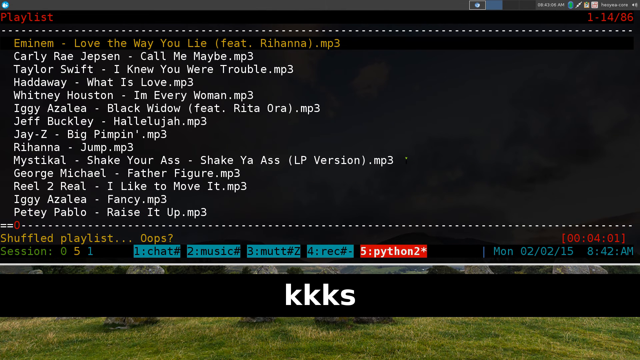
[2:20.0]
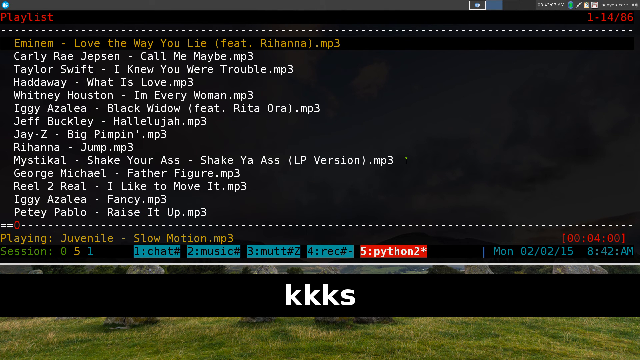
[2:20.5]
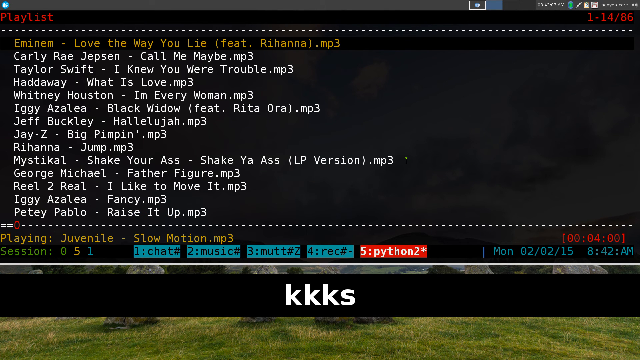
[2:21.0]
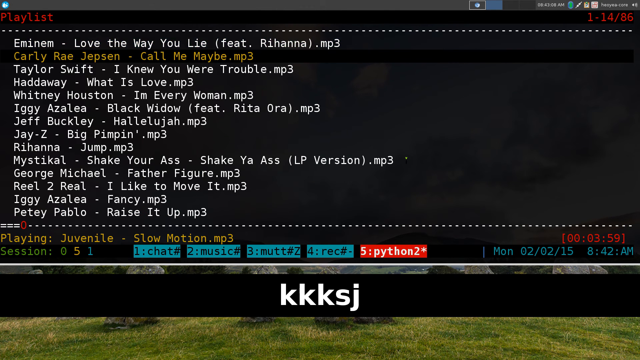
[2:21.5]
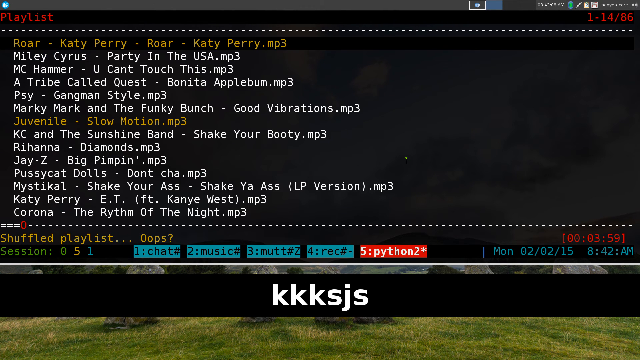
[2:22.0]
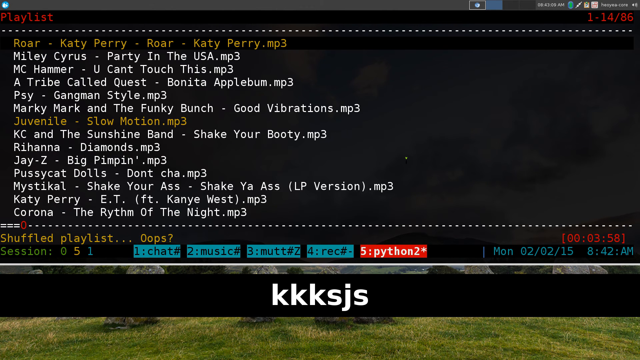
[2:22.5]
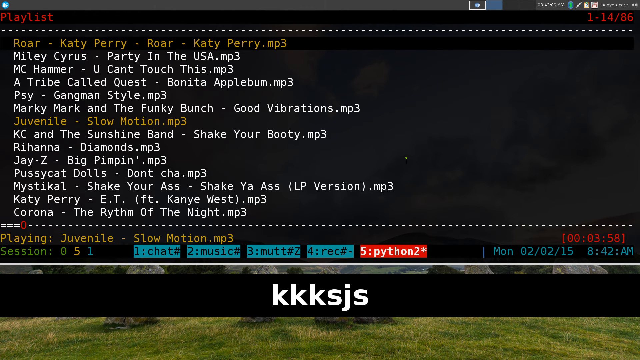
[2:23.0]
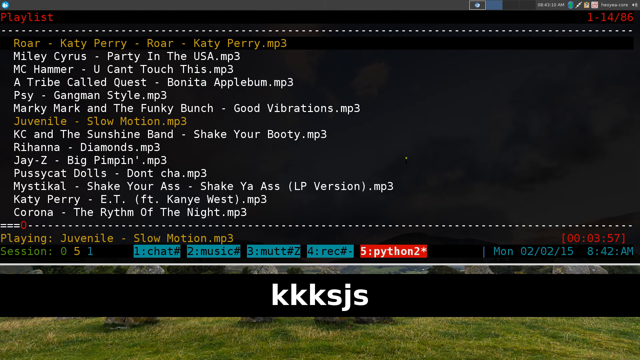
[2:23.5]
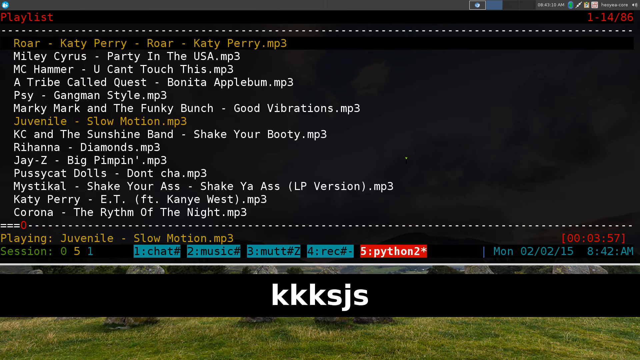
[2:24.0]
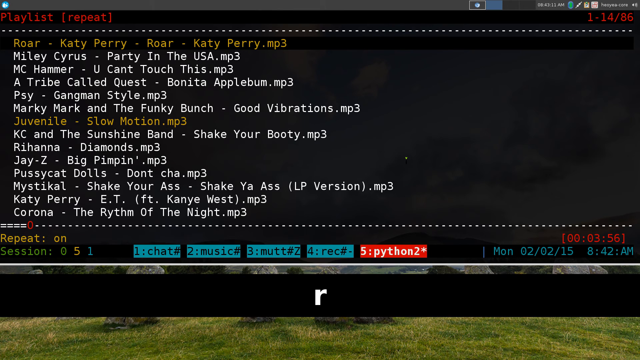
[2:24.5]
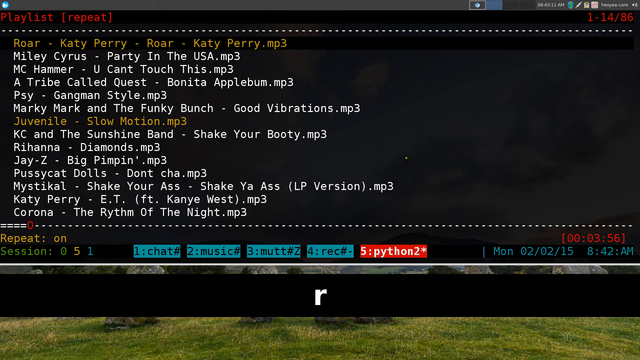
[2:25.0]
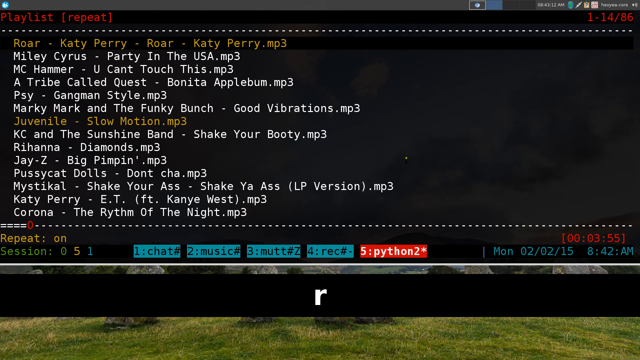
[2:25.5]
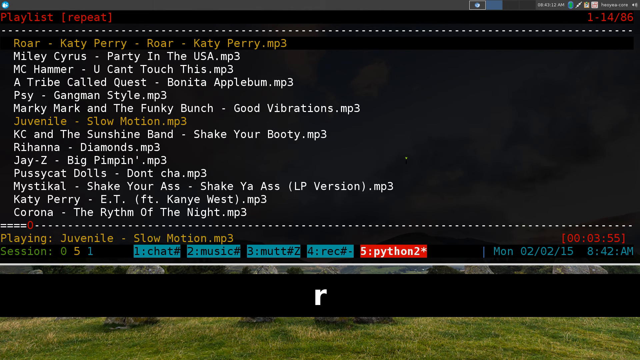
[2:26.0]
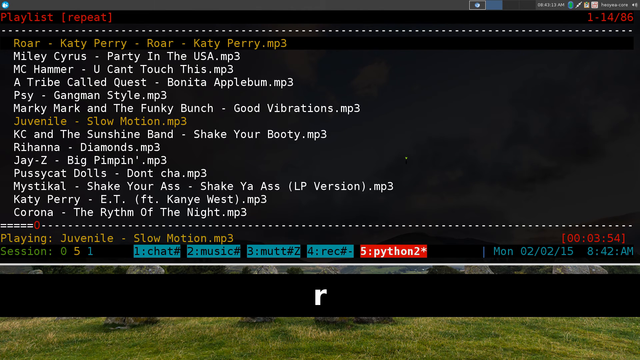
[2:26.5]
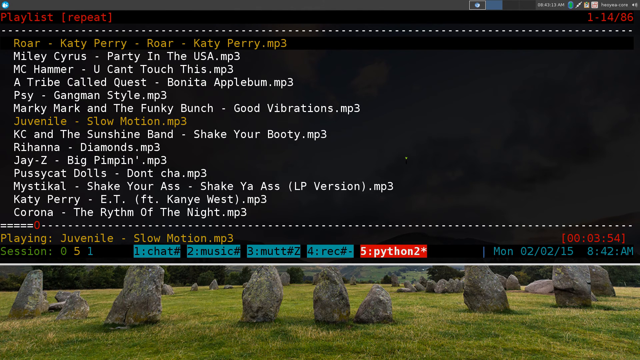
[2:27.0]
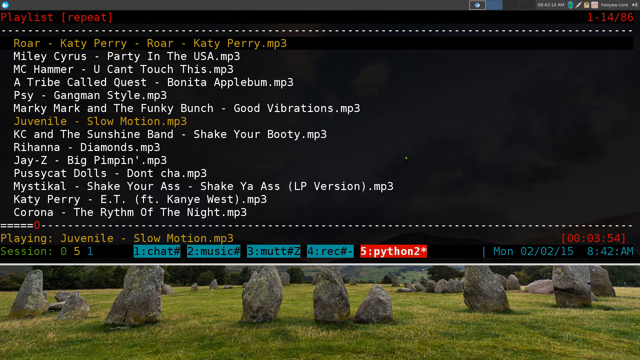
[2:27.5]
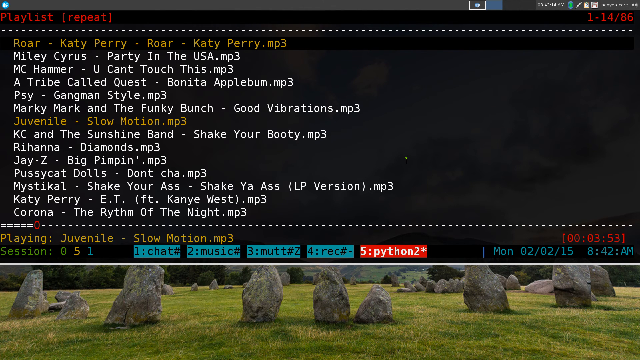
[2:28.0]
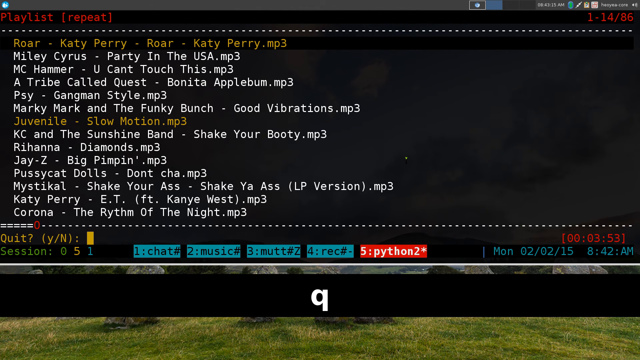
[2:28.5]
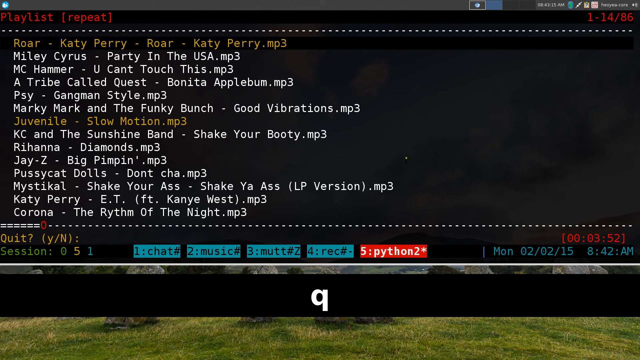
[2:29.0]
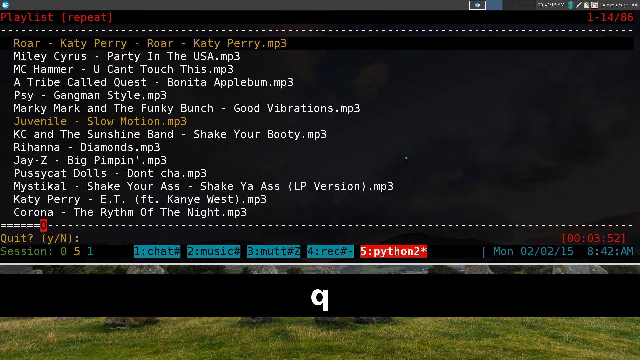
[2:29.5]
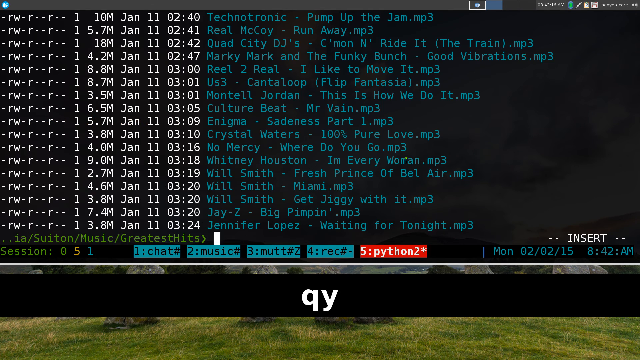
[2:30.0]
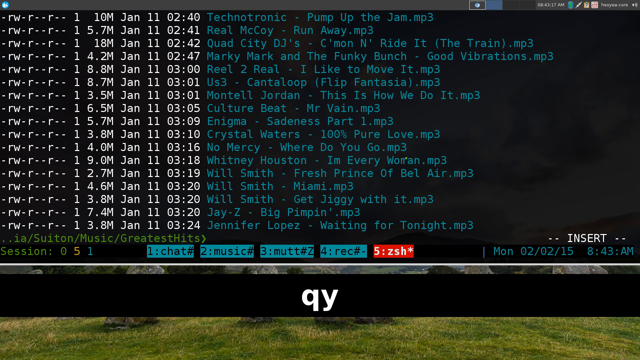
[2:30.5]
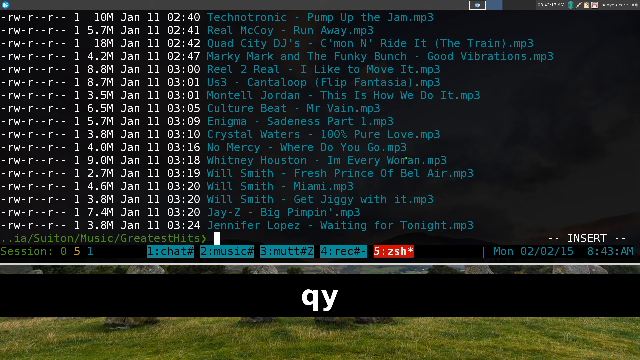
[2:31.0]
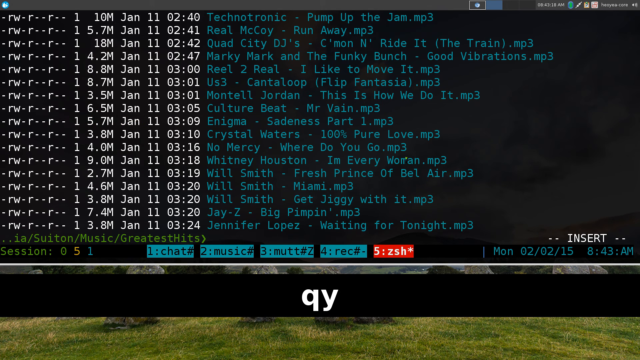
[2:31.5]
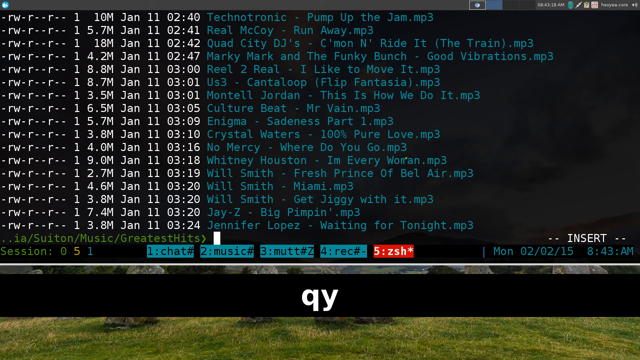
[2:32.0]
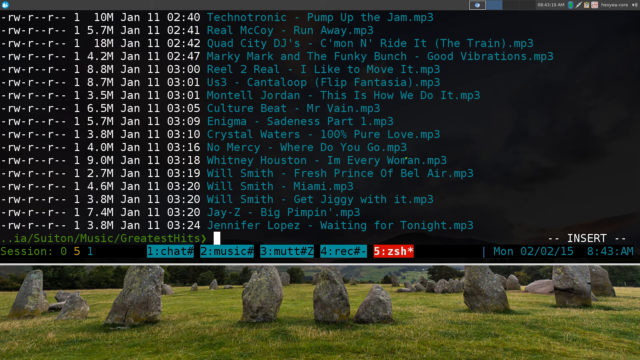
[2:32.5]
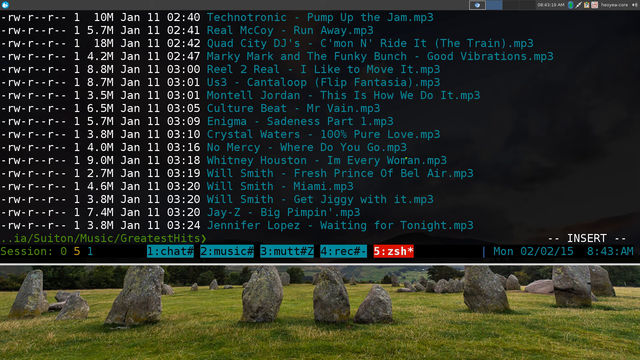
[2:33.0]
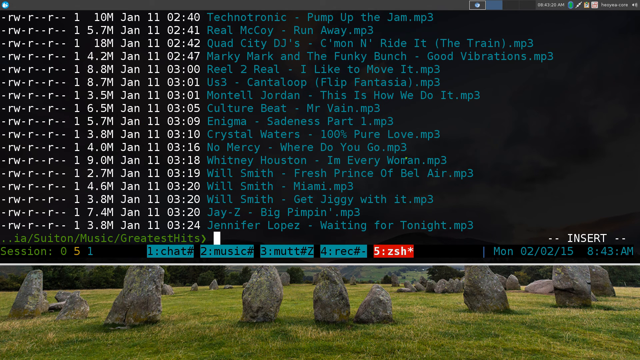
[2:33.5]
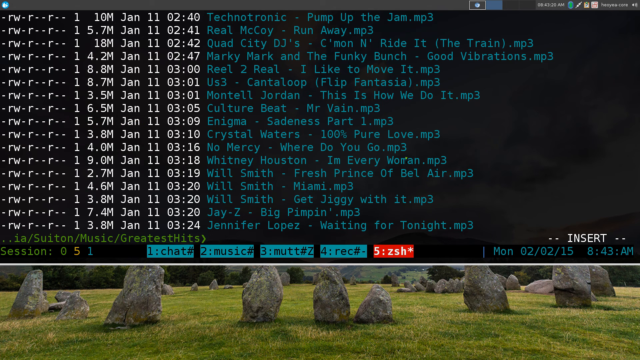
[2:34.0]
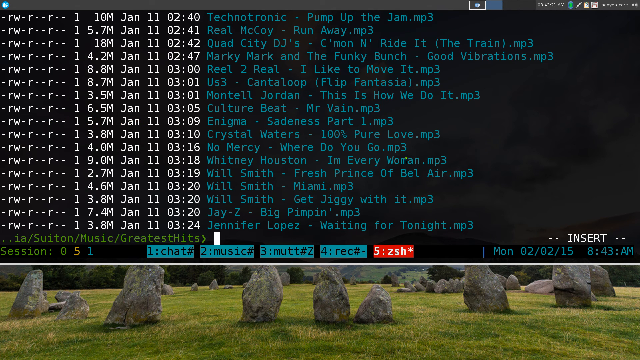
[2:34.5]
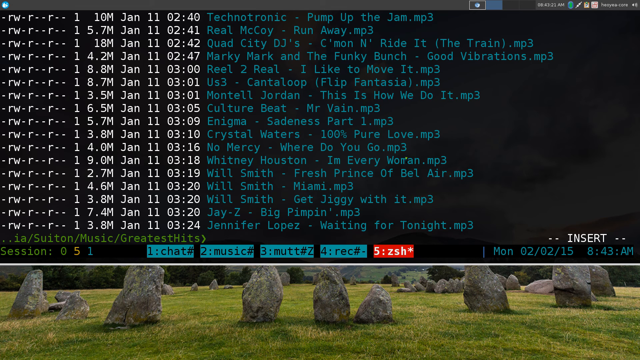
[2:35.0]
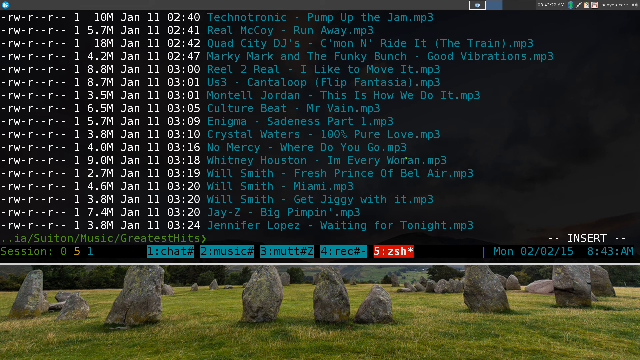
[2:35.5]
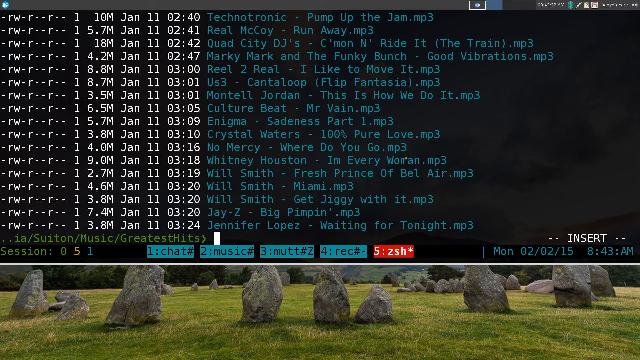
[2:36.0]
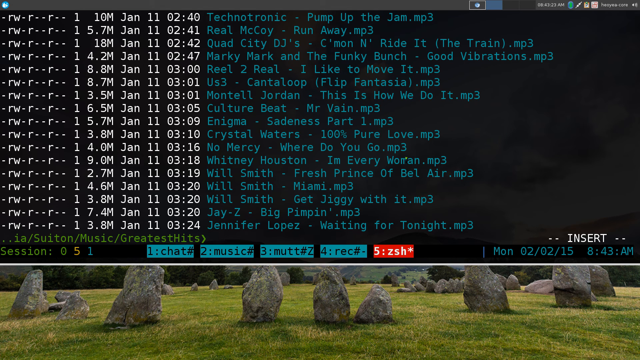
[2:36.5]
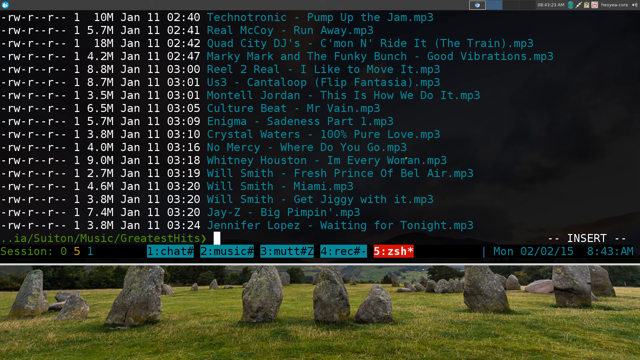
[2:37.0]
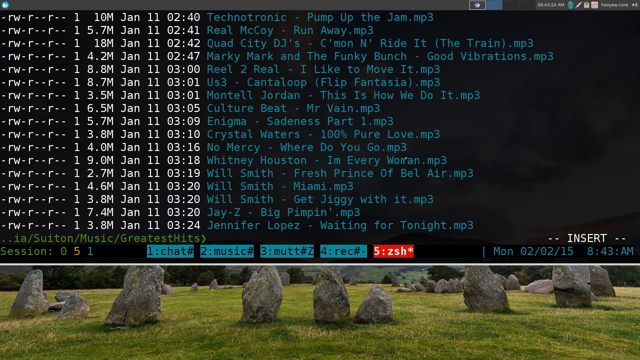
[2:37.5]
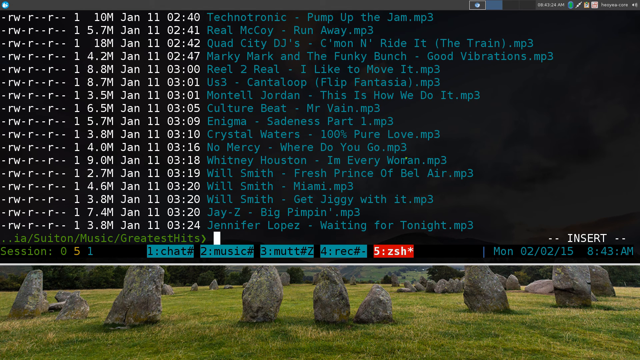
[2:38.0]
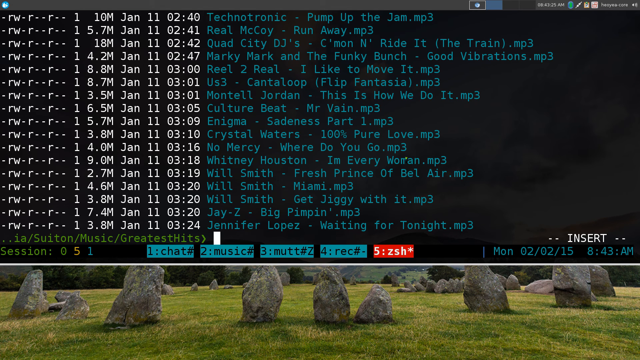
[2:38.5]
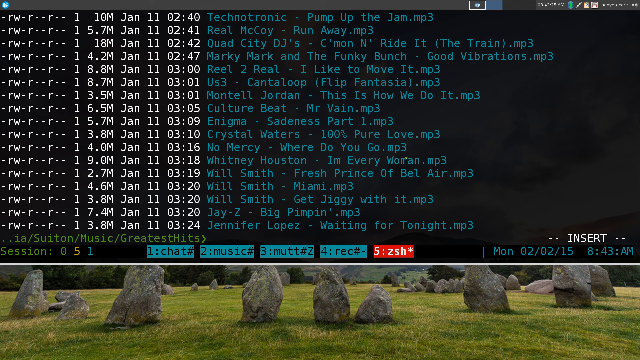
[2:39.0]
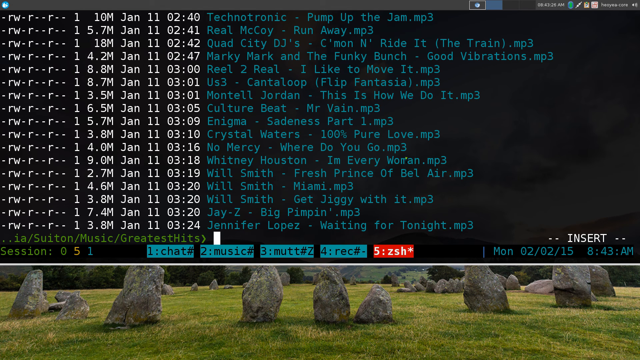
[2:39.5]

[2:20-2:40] The user presses the K key three times, then S, then J, then S again, shuffling the playlist multiple times. The player is still playing JuvenileSlowMotion.mp3, with 3 minutes and 56 seconds remaining. The user presses the R key to set the playlist to repeat, and the red header shows a repeat sign. The user then presses the Q key, and yellow text appears showing that a song is playing, with a quit prompt offering Y and N. The user presses Y to quit the player, returning to the initial terminal screen from the beginning of the video, which shows the variety of songs in blue wording. To the left of the songs are a date, a timestamp and the size of each song in the greatest hits folder.